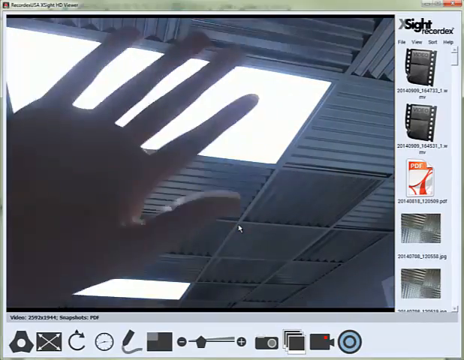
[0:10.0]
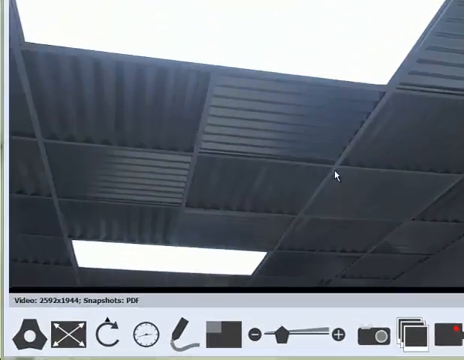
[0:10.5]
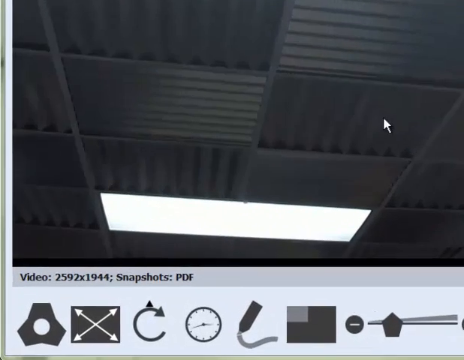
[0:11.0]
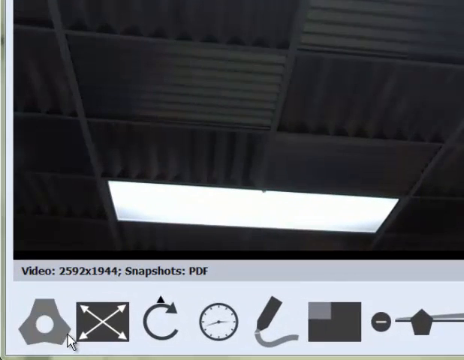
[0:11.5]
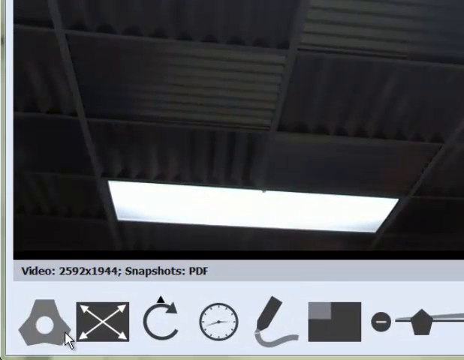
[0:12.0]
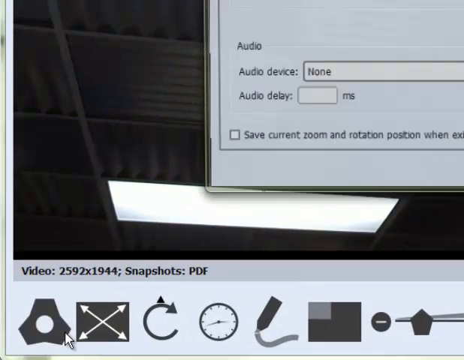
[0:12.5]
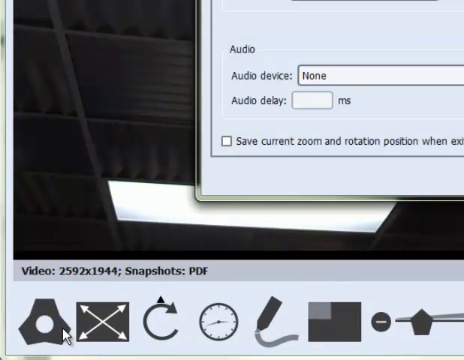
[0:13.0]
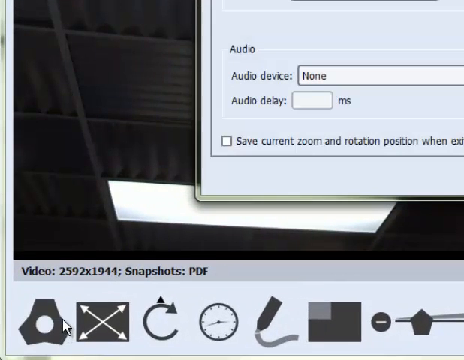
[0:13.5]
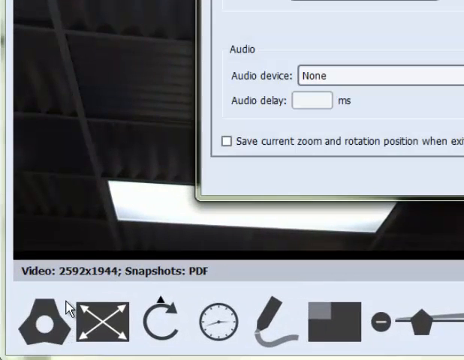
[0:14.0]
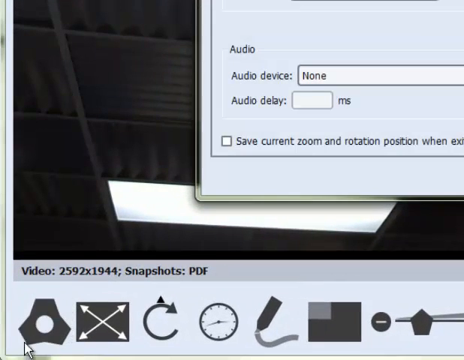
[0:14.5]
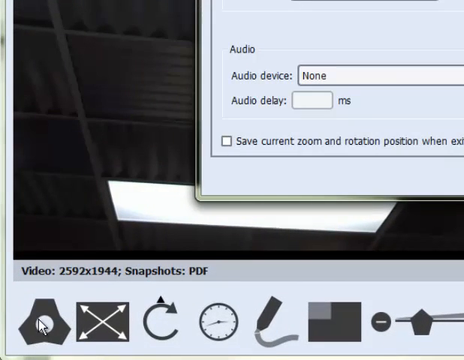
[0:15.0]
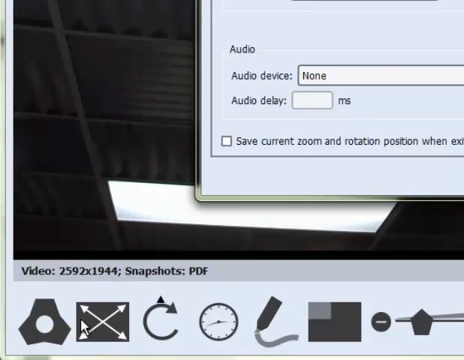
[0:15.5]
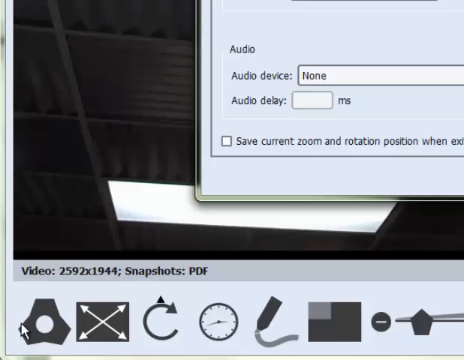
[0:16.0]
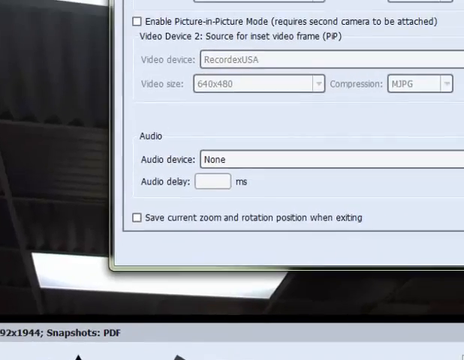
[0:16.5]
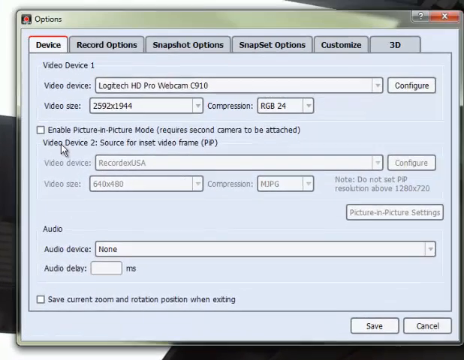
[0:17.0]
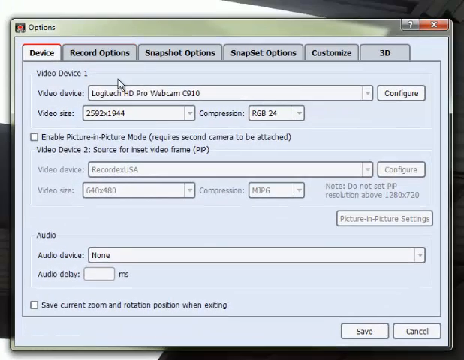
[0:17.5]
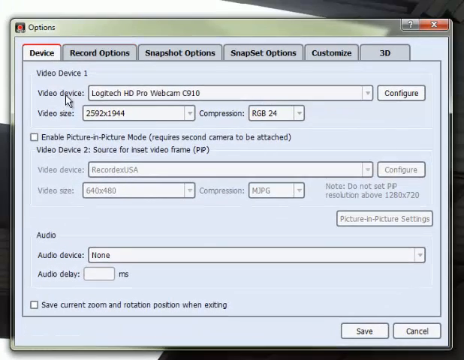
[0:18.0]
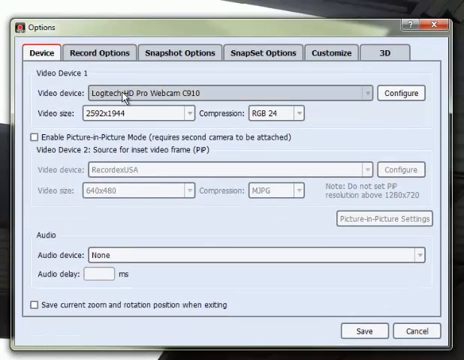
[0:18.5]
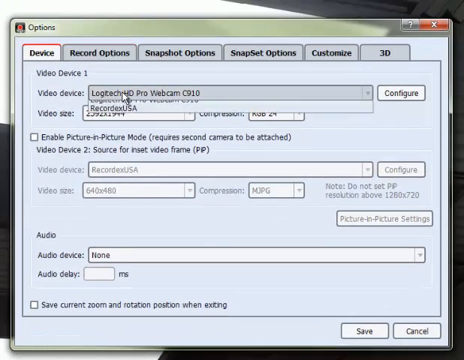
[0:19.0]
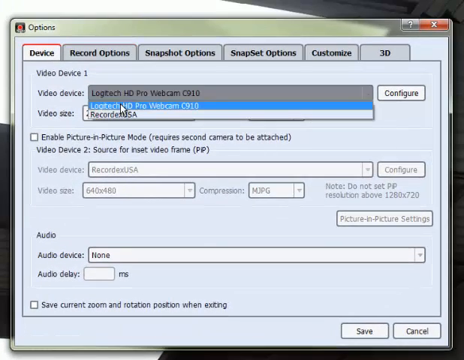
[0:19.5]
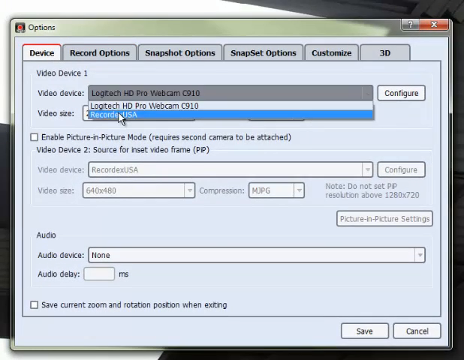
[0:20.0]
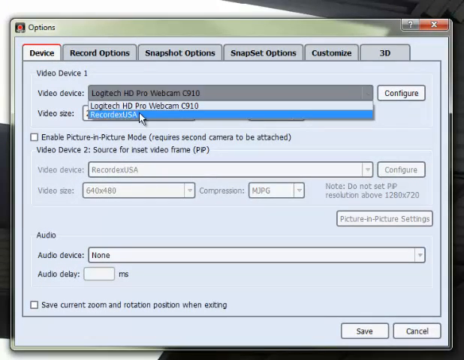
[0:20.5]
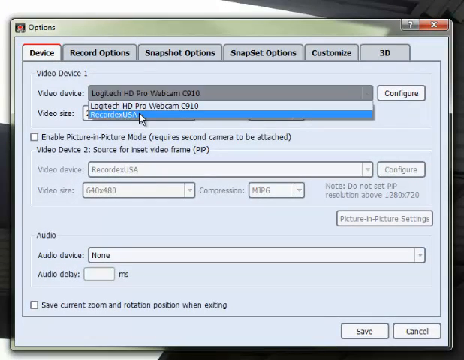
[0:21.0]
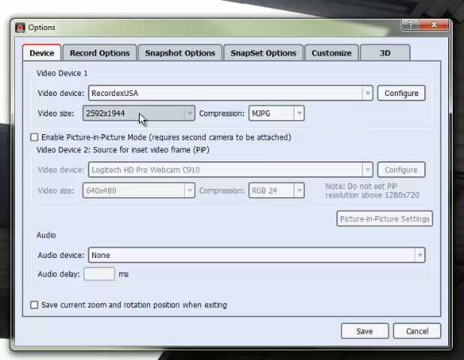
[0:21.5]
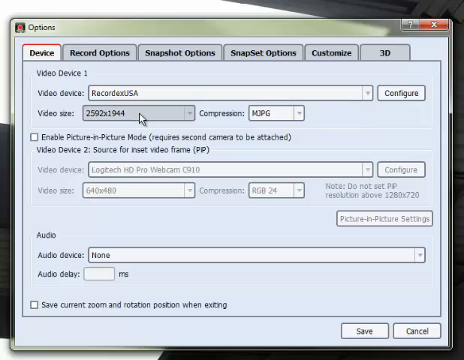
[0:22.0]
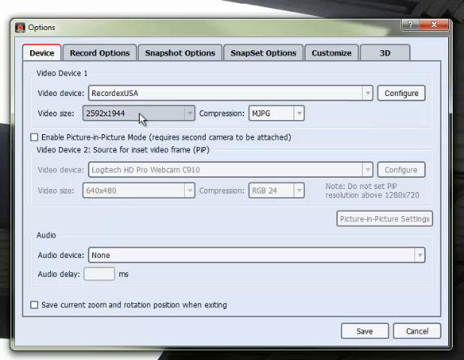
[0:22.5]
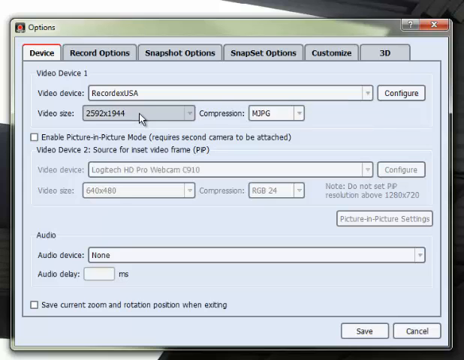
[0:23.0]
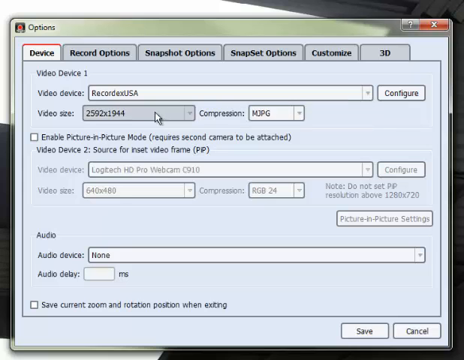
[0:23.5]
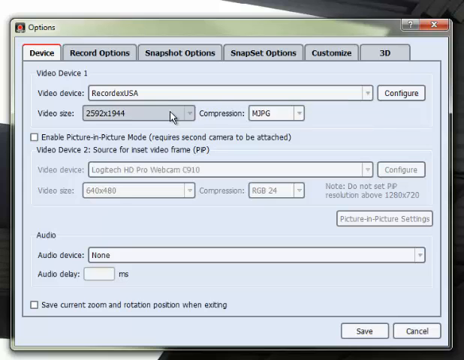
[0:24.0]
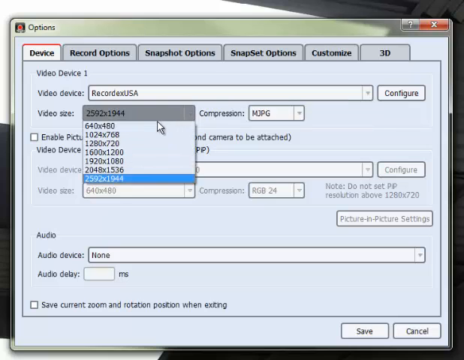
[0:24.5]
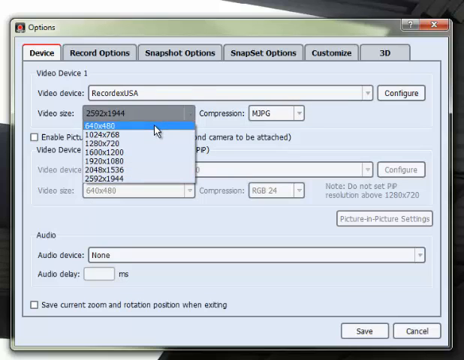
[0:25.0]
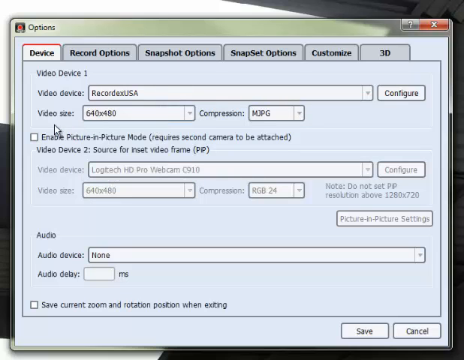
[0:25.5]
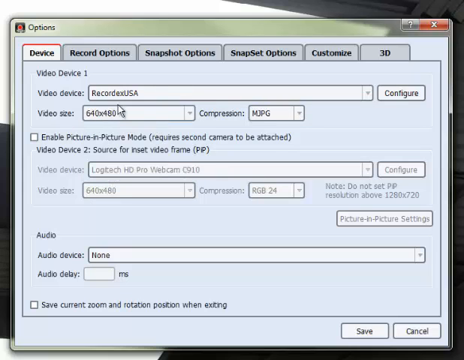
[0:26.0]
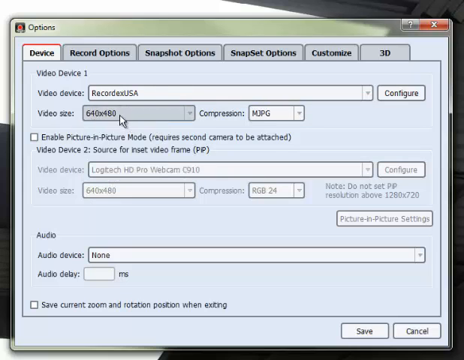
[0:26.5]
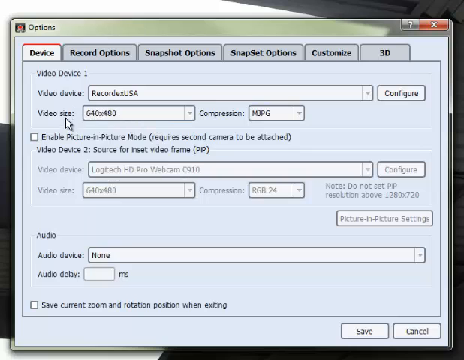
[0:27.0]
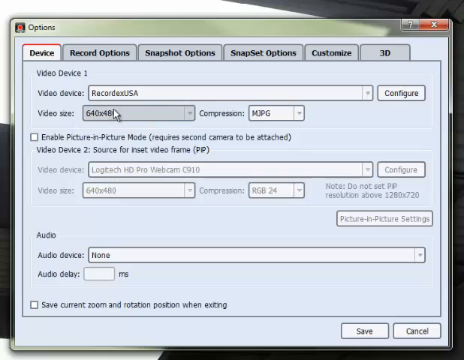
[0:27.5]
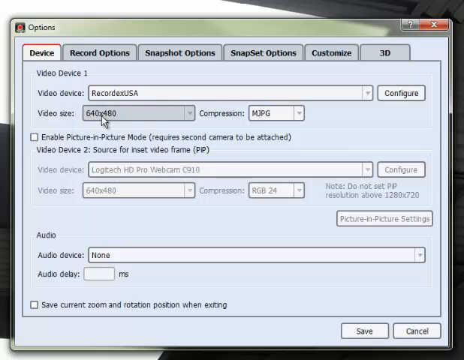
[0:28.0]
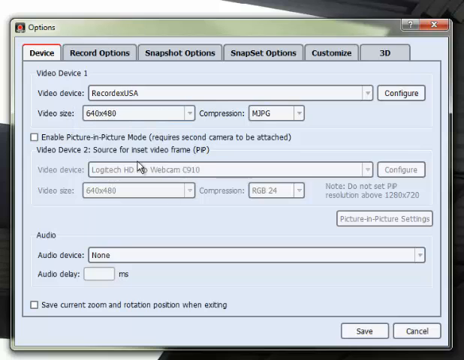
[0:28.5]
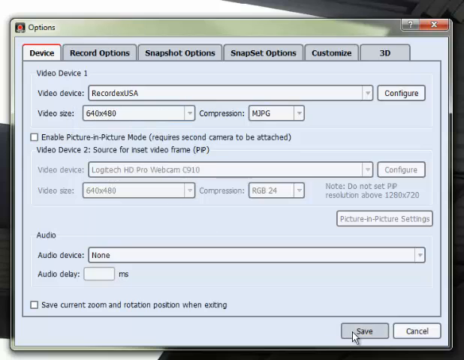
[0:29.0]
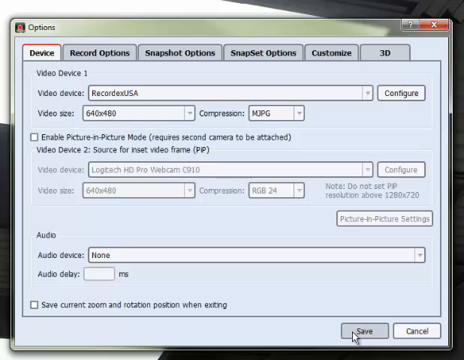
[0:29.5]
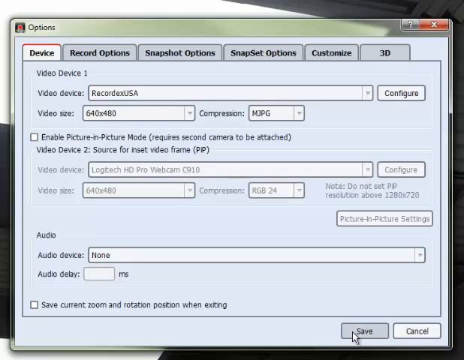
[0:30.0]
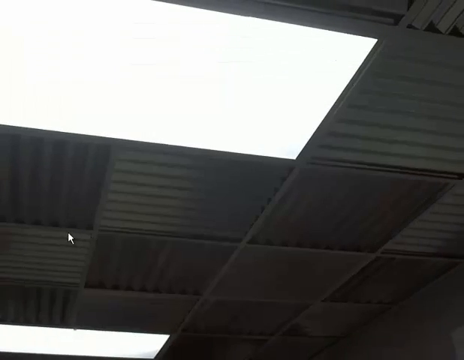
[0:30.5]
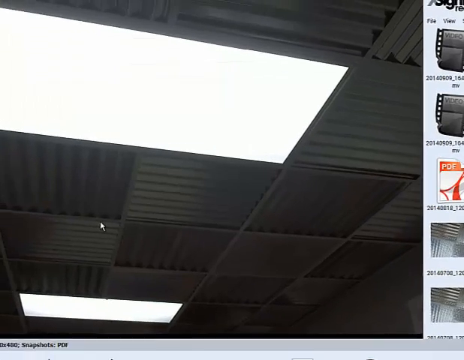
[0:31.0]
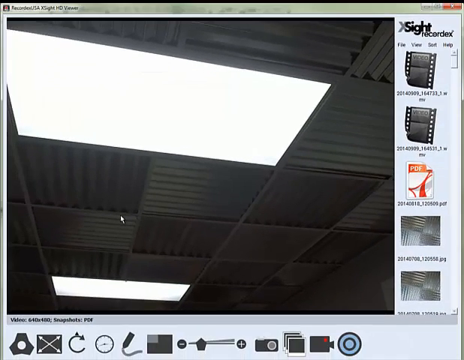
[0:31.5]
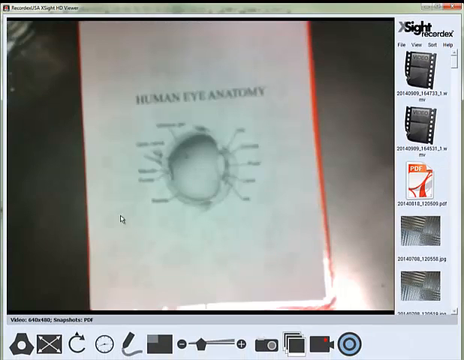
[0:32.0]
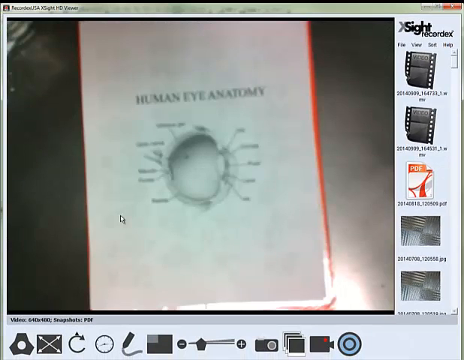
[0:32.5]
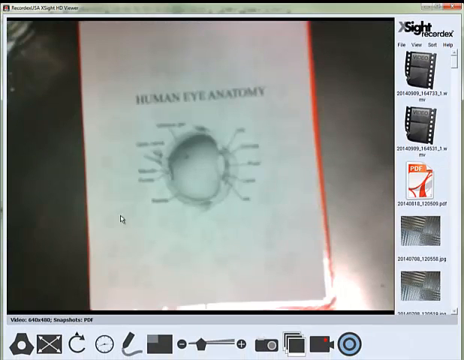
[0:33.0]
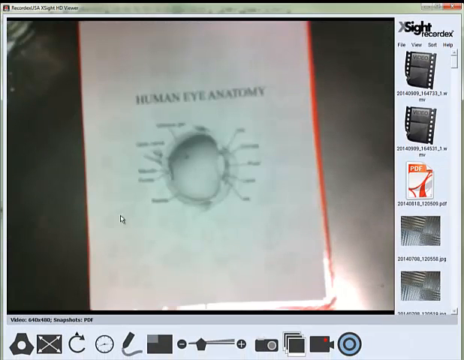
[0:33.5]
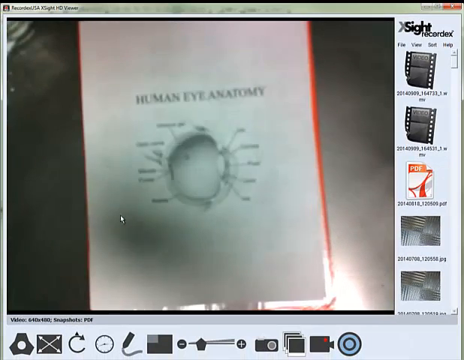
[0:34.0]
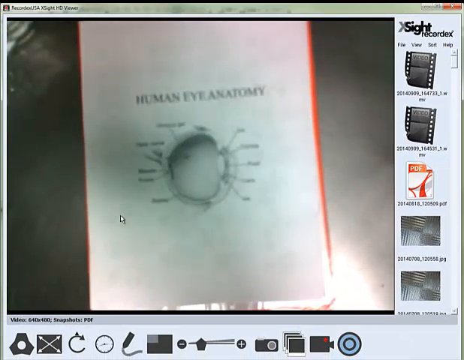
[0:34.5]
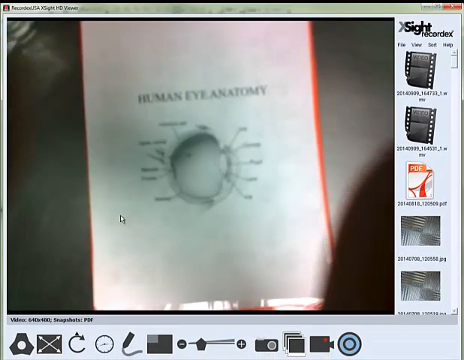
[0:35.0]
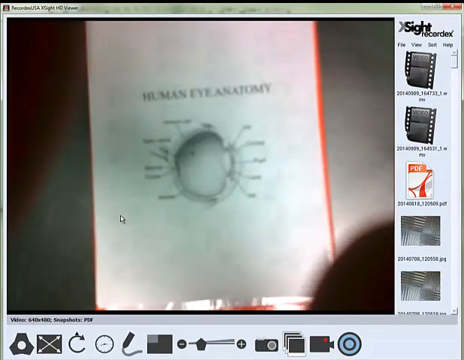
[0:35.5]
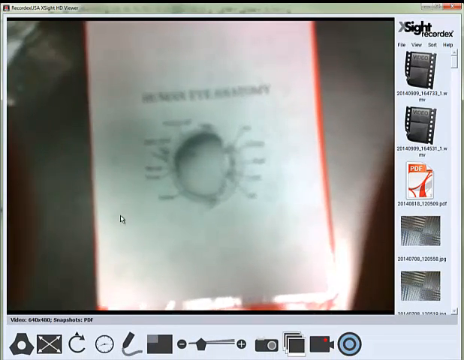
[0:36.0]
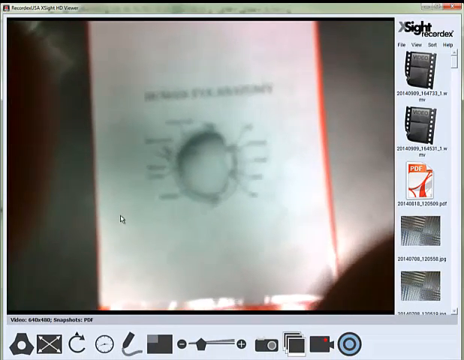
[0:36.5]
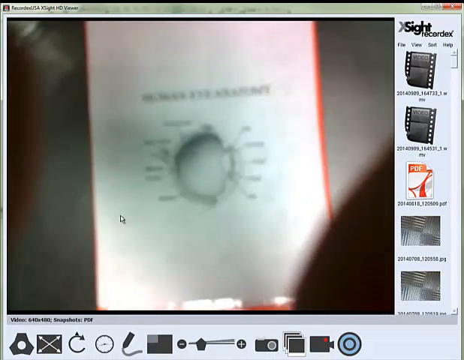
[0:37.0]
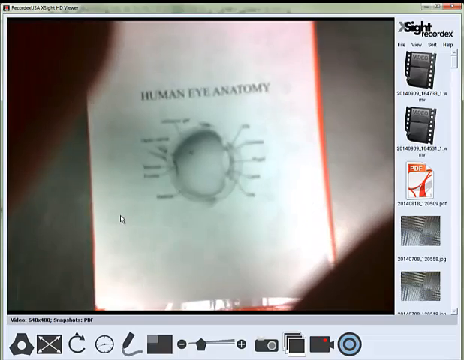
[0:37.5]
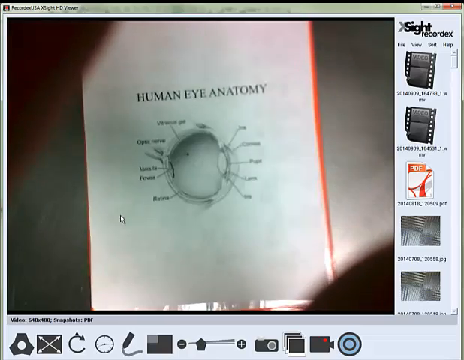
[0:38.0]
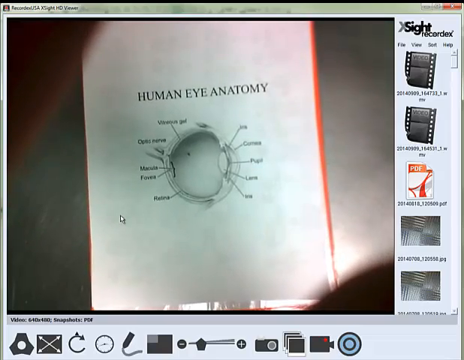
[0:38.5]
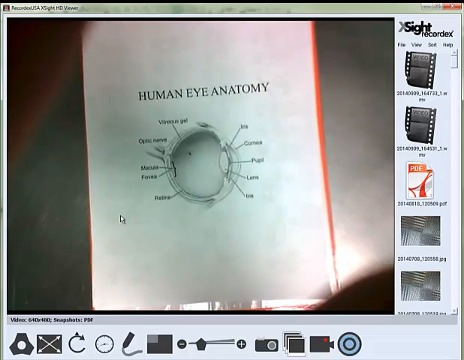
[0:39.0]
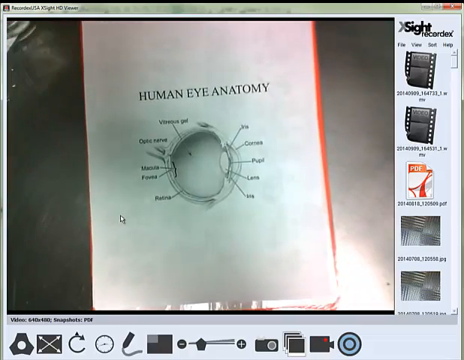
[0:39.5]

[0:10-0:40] A recording of someone in a room begins, and they appear to be waving their hand at the camera. The view zooms in, and at the bottom it says "Video" with some numbers, then "Snapshots, PDF," with some options listed below that. On the main screen a box is open that says "Options" up top, with options listed on tabs, places where information can be filled out, and some buttons. Someone appears to be pointing to different sections with an arrow, seemingly going over the different options on this screen. They click save, and the view goes to a shot of what appears to be a book that says "Human Eye Anatomy," with an eye whose different parts are labeled.